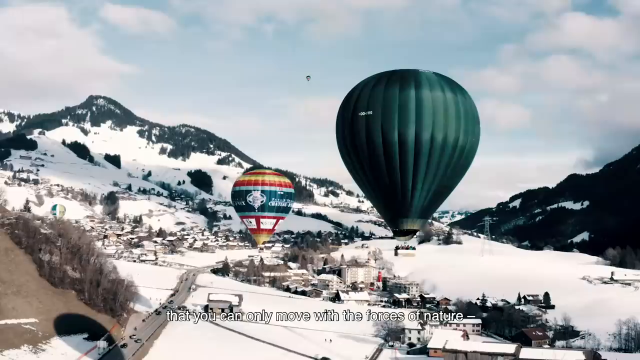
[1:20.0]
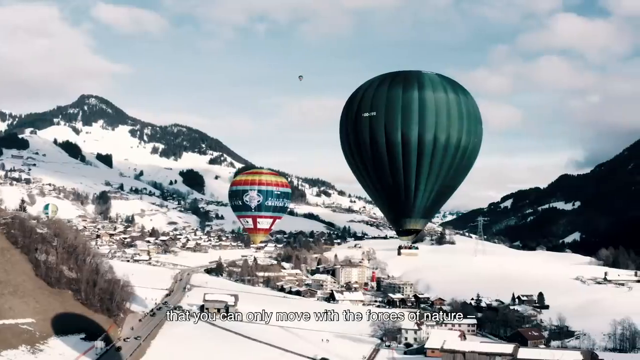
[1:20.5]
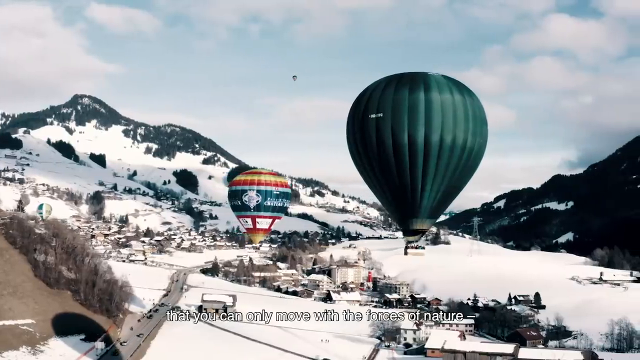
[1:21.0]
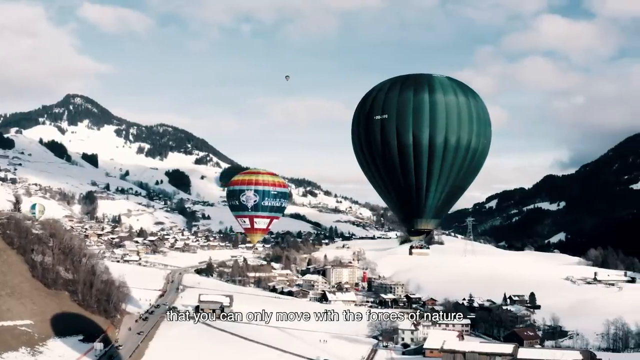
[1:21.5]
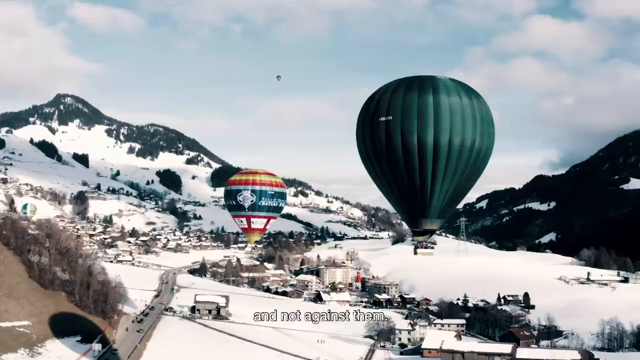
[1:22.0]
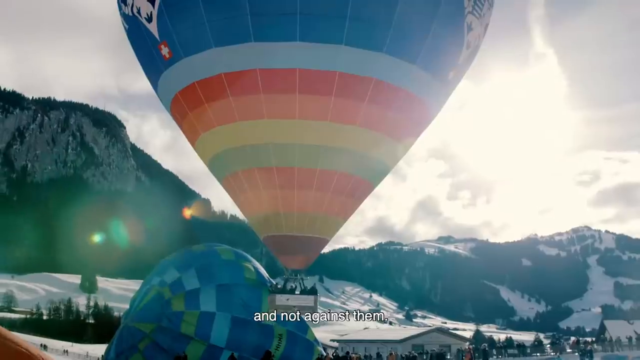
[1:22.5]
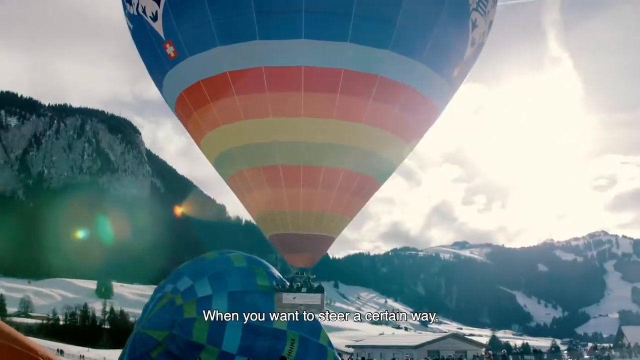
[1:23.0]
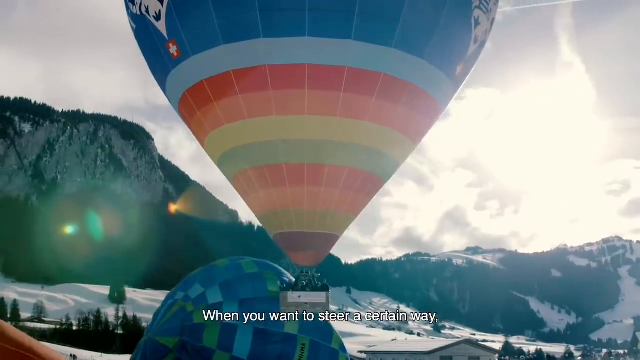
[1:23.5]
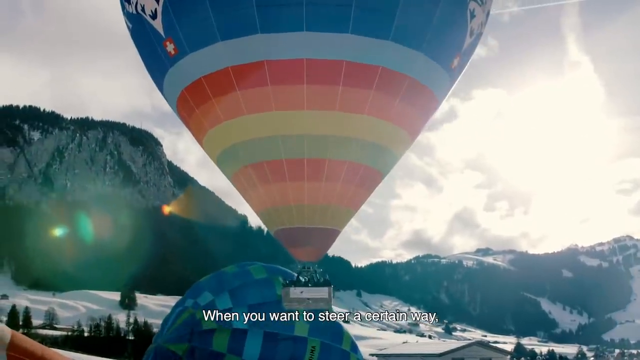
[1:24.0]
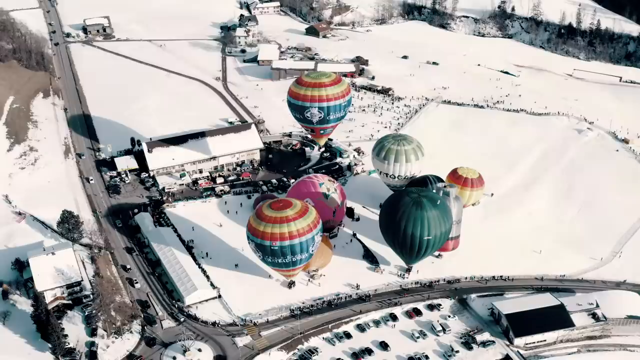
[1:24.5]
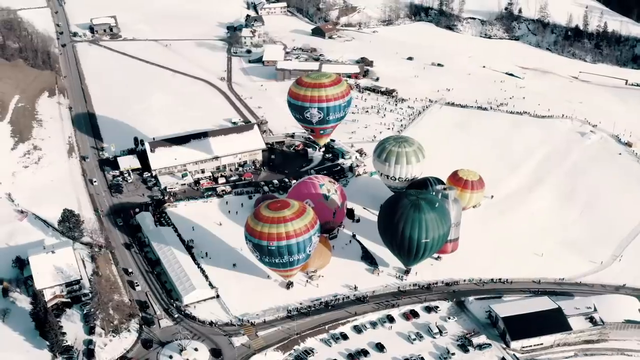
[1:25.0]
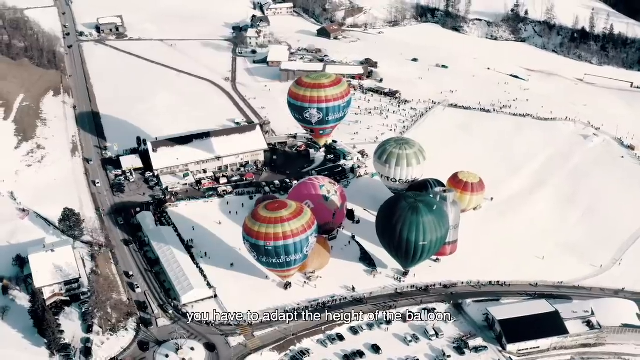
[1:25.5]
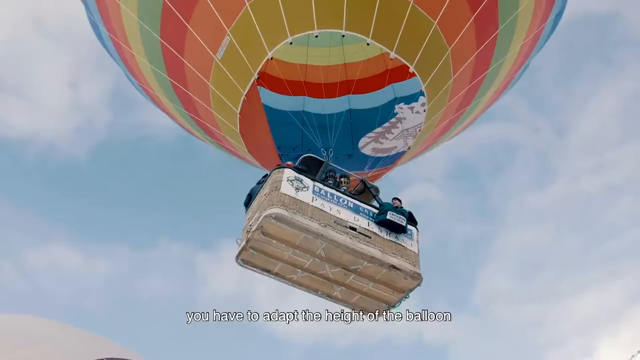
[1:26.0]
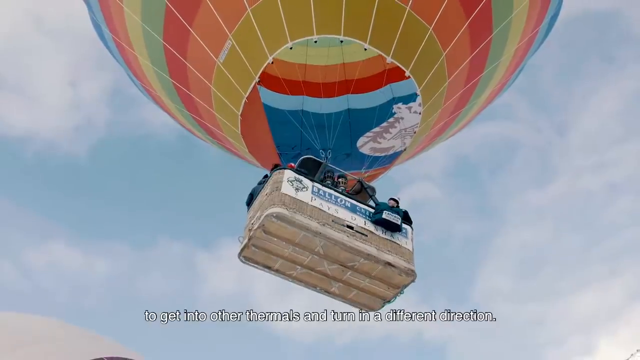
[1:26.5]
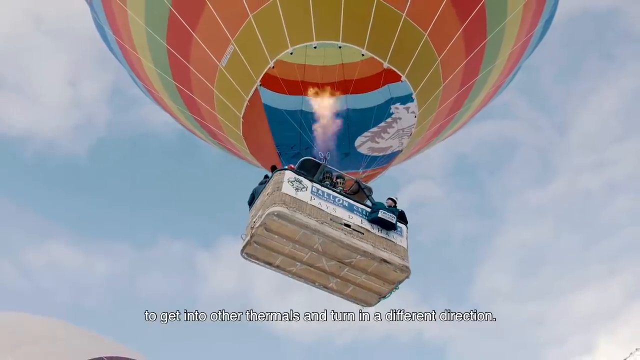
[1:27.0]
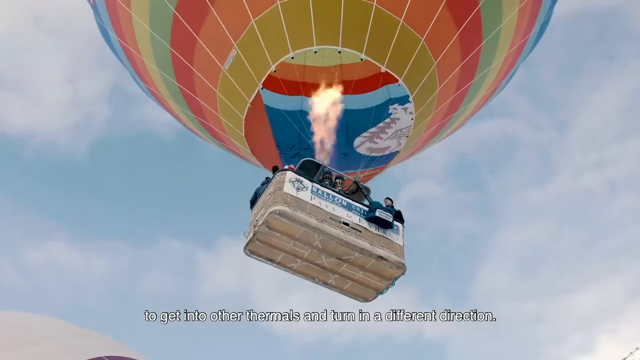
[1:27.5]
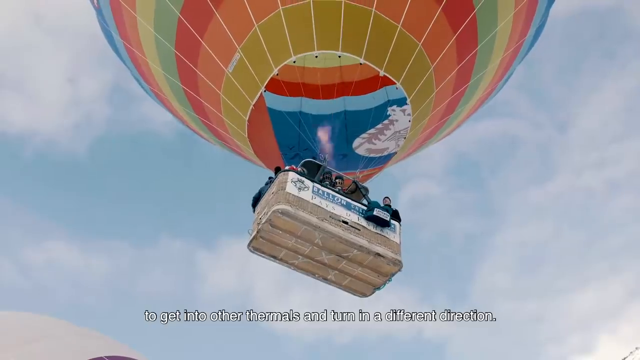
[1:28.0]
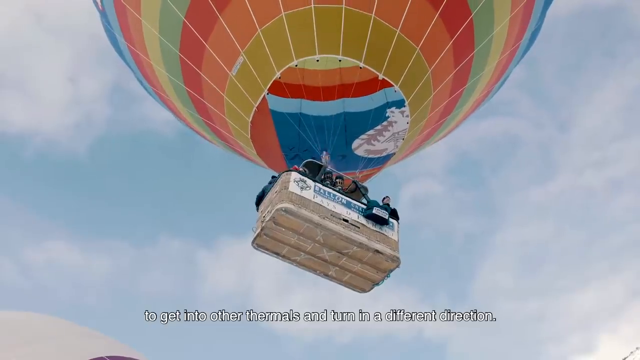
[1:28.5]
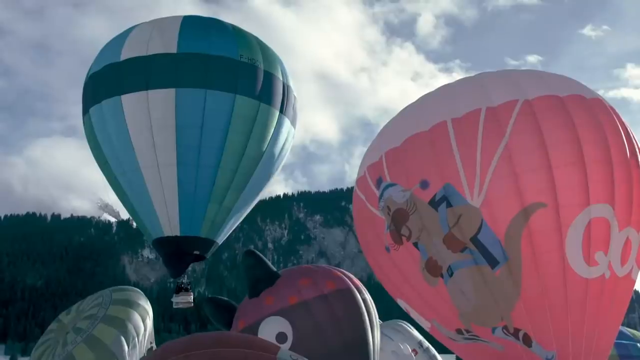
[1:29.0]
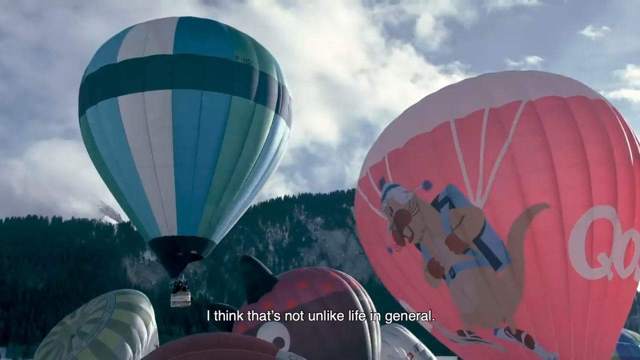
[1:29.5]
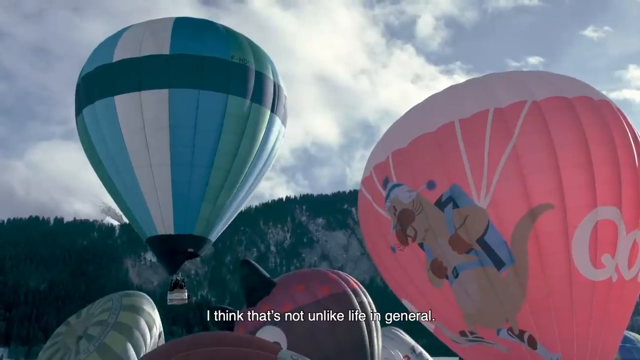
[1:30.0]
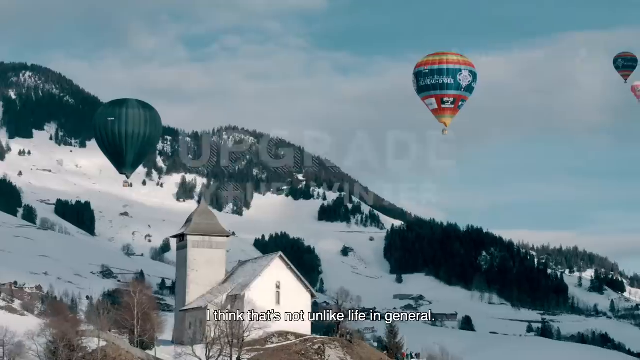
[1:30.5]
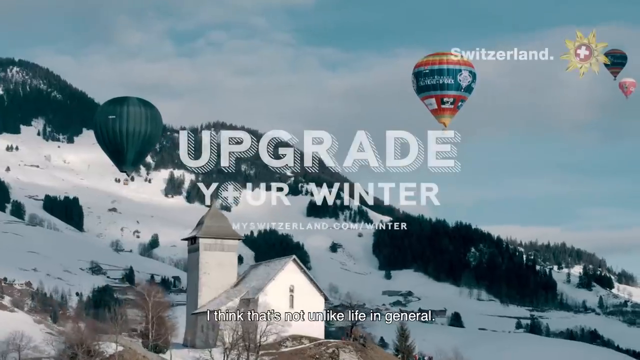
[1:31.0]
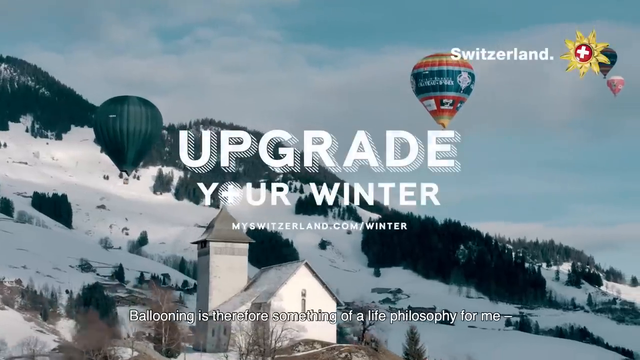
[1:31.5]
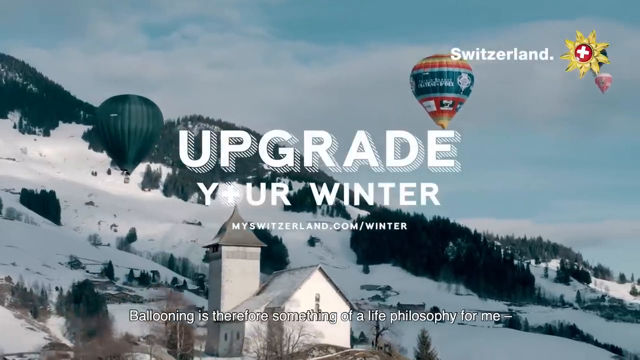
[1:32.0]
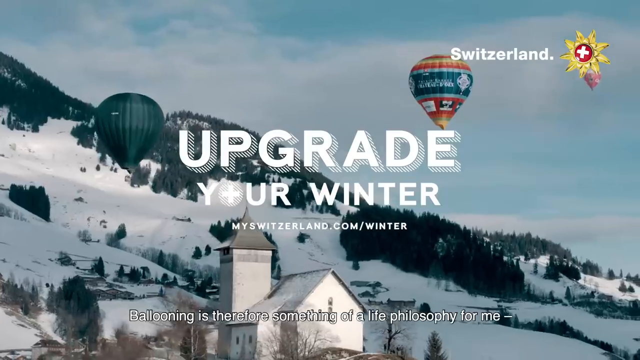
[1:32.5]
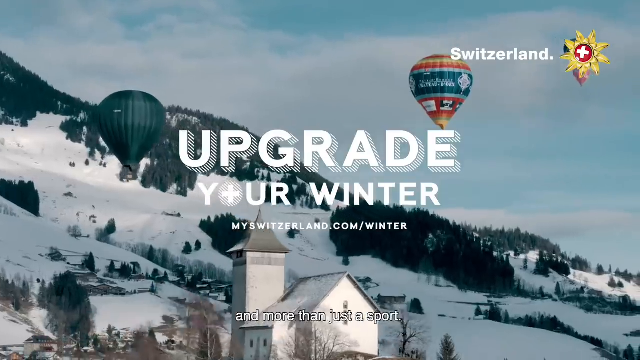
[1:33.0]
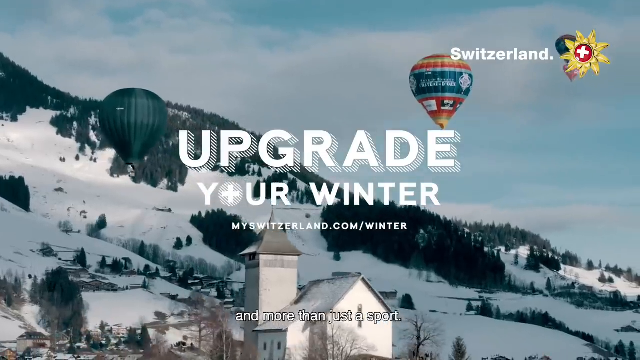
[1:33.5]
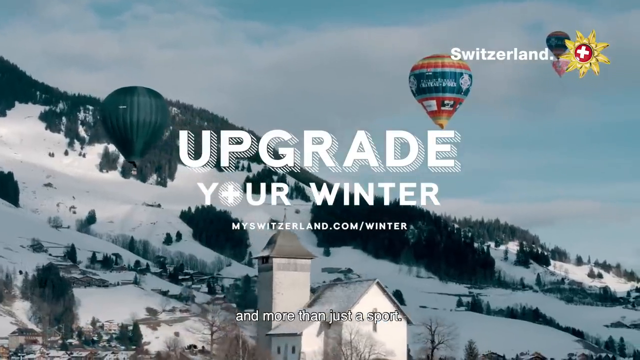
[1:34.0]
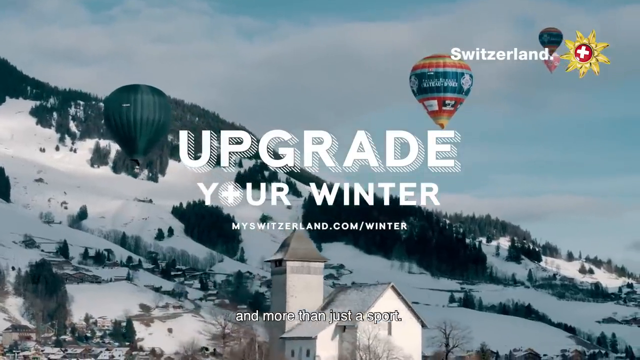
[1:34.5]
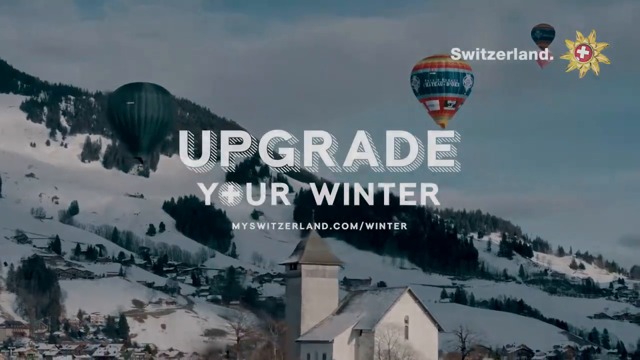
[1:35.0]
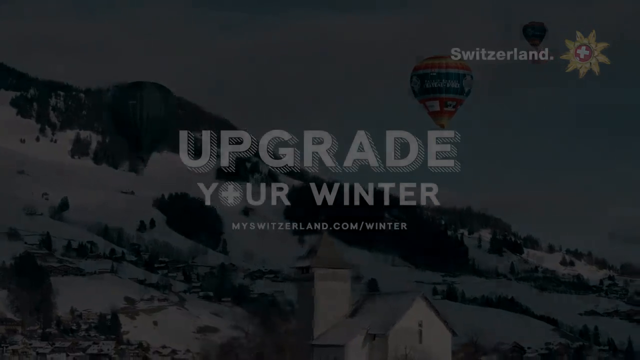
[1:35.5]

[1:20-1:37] Two new balloons appear. One is rainbow-colored on the bottom with some other stripes on top; it is huge and multi-shaped. Its basket floats up with what looks like eight people in it in winter gear, and a huge flame rises from the center to make it float up. The shot is taken from the ground, looking upward into the area where the flame is lit. A few other balloons float up at the same time, including one that is completely dark and more green. The sky is not clear, with some light clouds, and light glimmers off the camera. The balloons start to float down, and the camera zooms back out on the village from afar, similar to the start of the video.